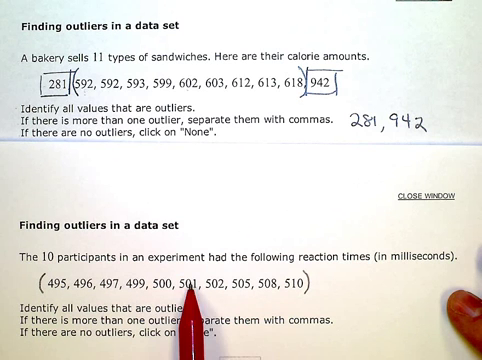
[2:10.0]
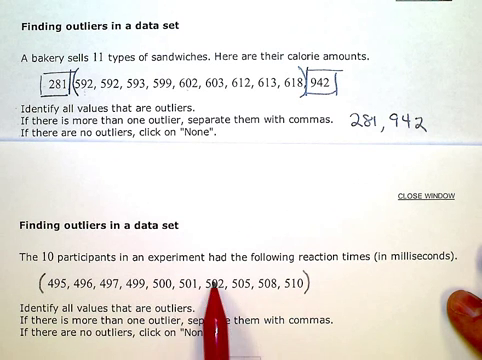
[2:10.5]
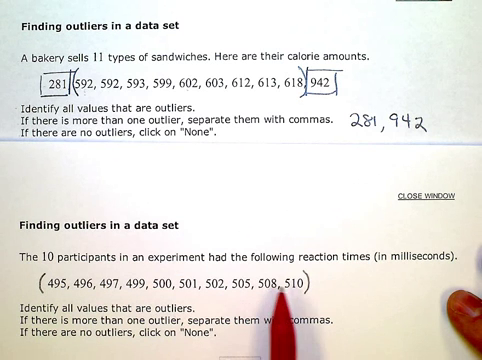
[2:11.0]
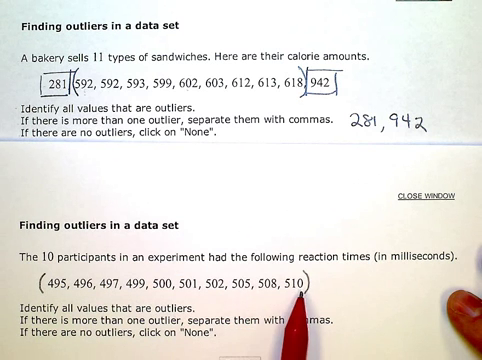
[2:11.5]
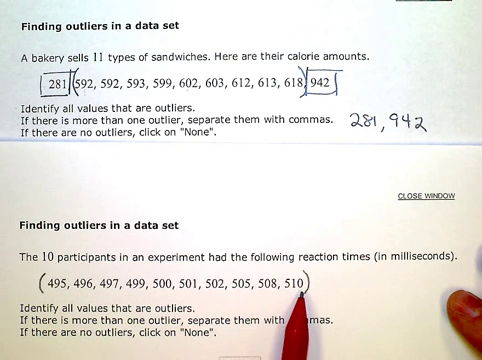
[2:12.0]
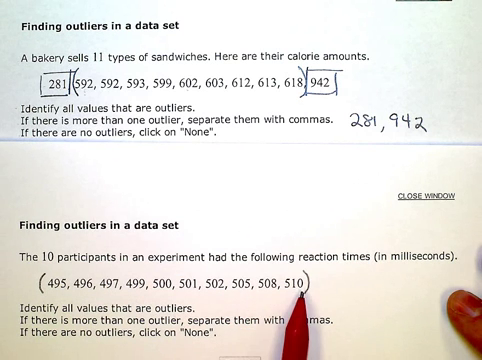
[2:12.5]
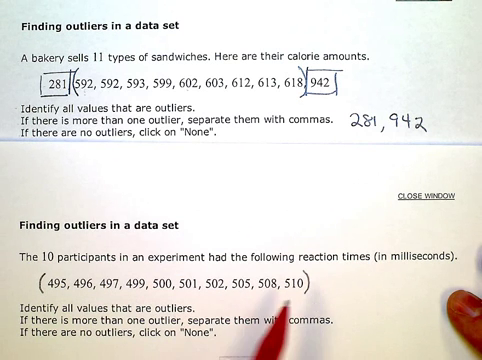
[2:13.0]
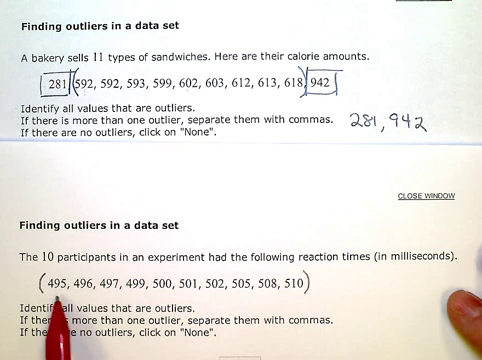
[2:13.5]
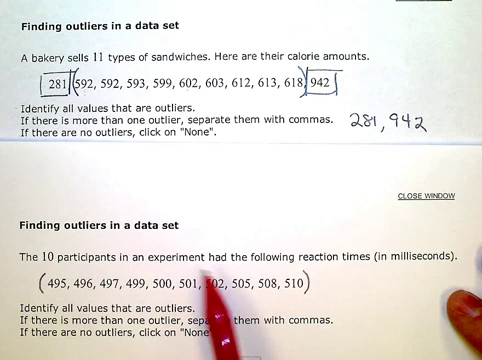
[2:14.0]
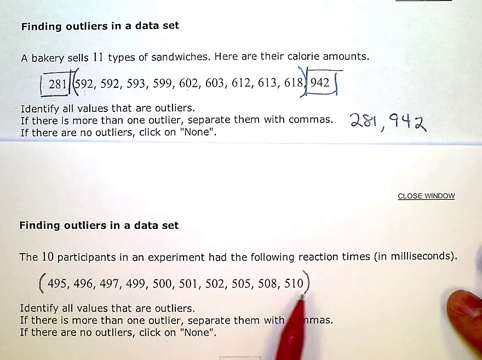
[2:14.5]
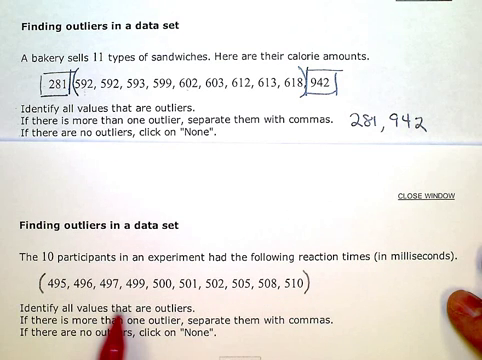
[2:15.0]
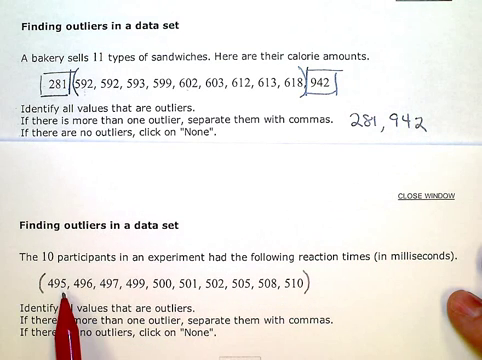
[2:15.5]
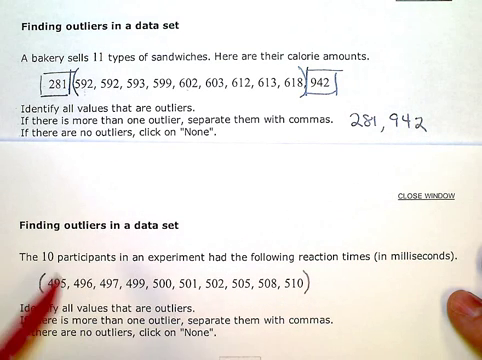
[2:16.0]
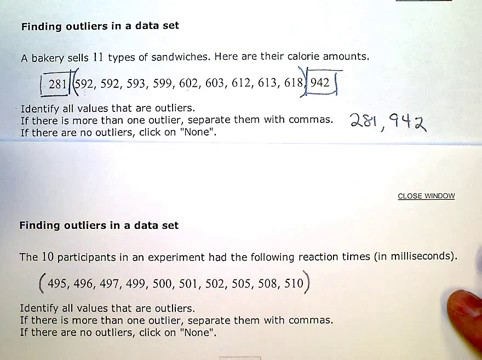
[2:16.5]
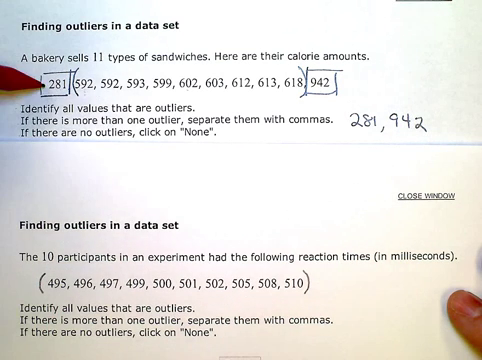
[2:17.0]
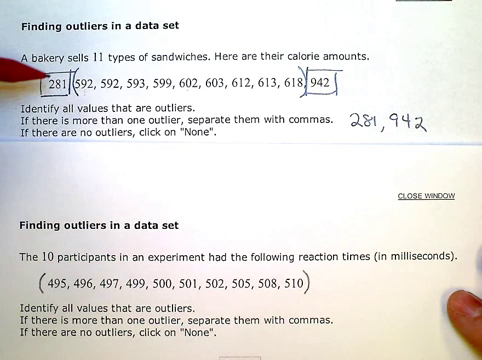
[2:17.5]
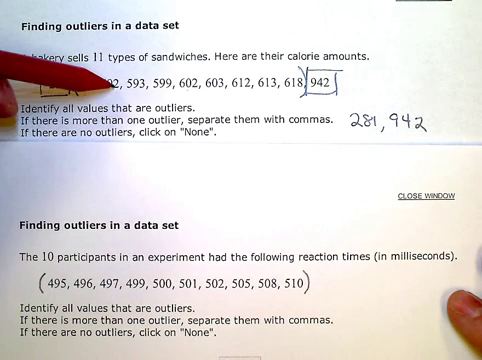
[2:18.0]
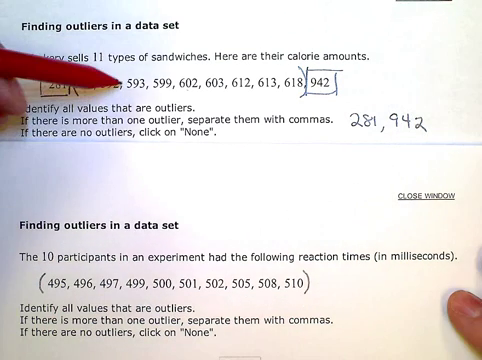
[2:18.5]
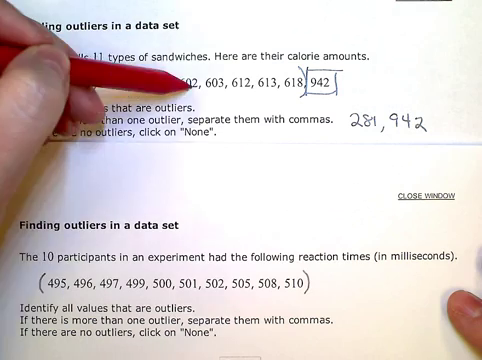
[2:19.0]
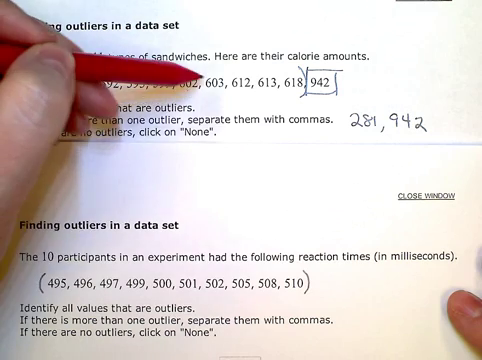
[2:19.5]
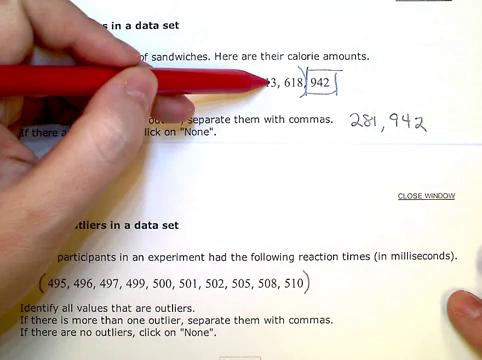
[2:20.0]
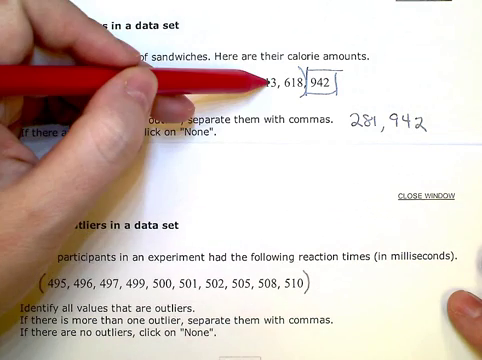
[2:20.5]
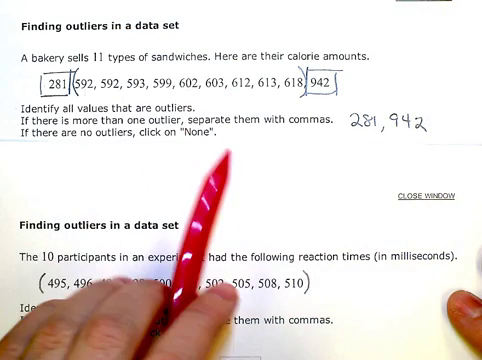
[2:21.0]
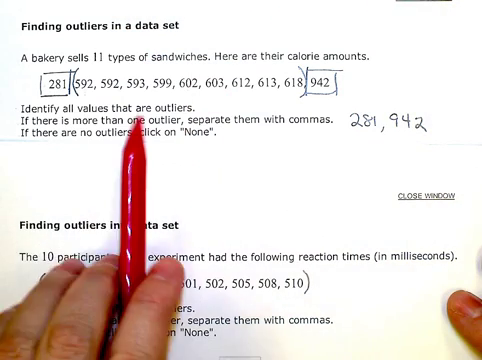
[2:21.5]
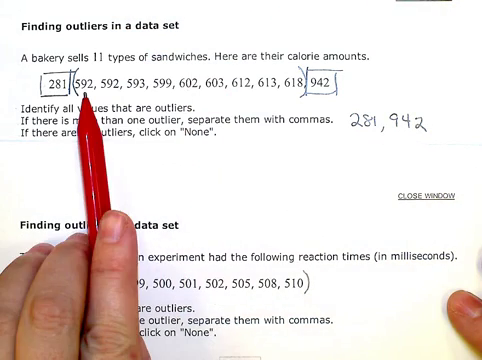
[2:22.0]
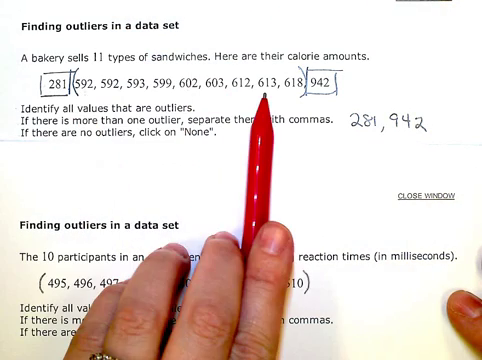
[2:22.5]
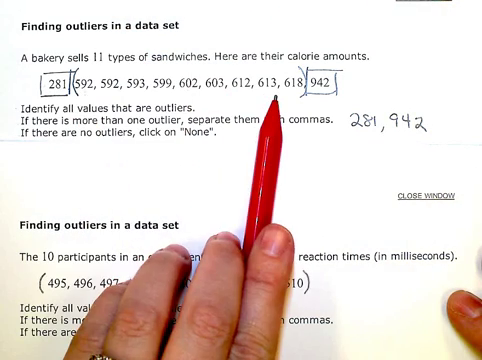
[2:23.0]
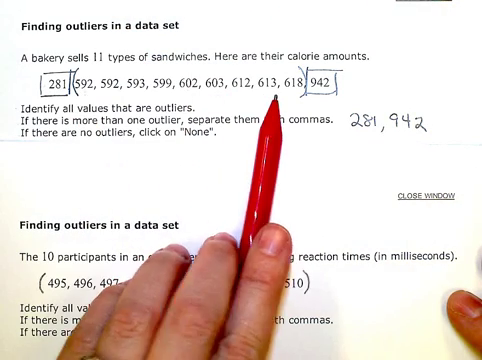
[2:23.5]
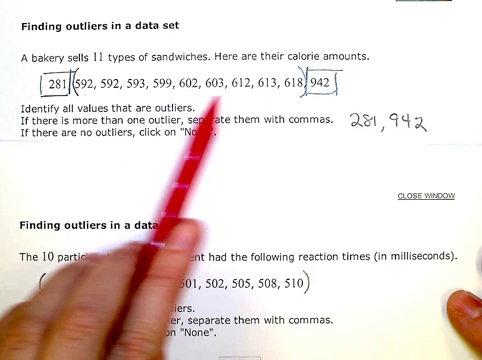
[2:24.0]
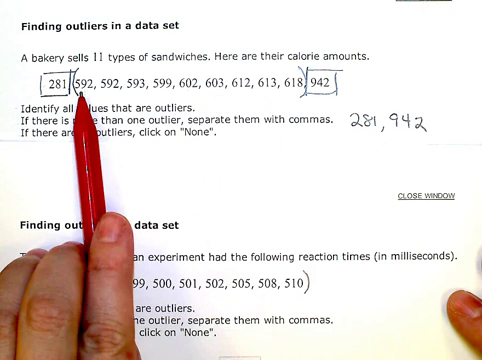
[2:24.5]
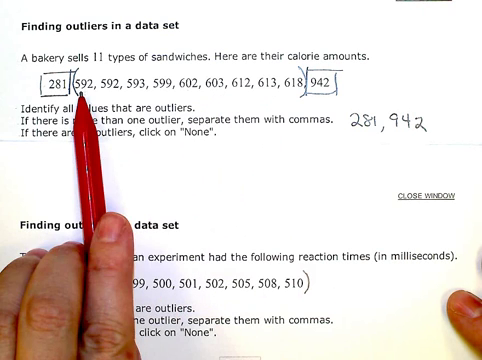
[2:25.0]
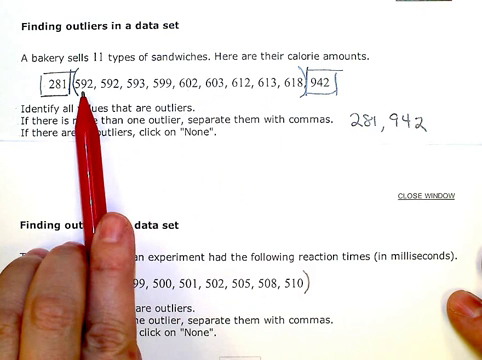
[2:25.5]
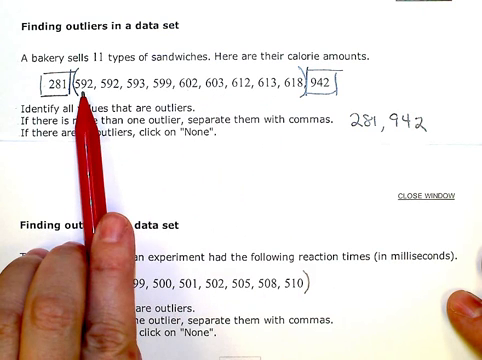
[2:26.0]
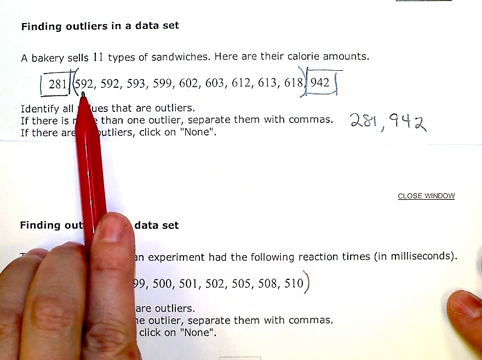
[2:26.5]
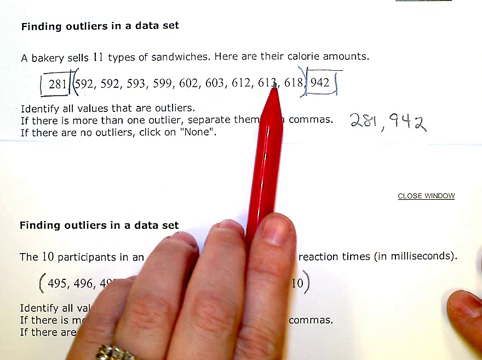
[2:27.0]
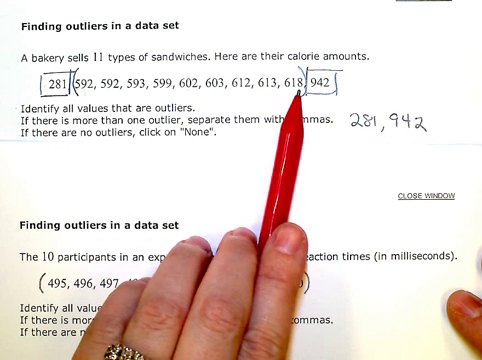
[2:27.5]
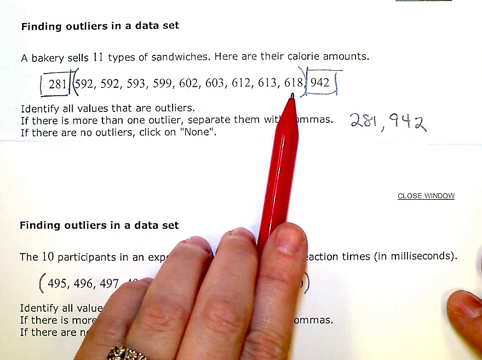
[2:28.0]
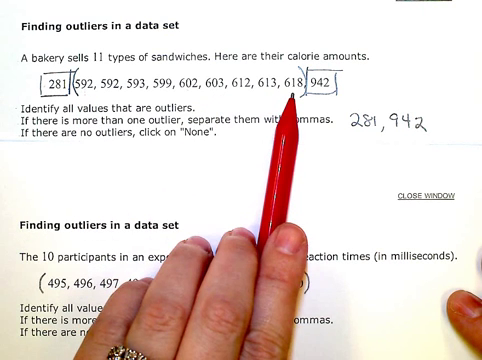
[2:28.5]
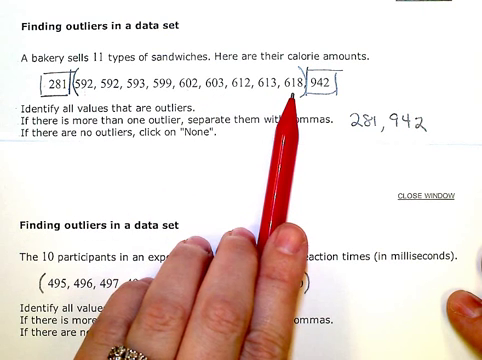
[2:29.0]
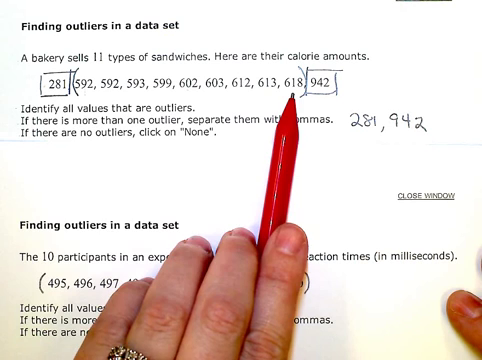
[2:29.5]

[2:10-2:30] The index finger points toward "milliseconds" while the pen, held in the left hand, starts at 501 and moves across to 510 at the end. The pen is moved all the way across again for emphasis and then taken away from the screen, and the shadow of the hand appears briefly on the left side. The pen is brought in from the top left back to question one, pointing to the numbers in the brackets and moving all the way to the end of the array. The pen rests on the middle finger, held by the index finger and thumb, pressing into the part of the hand where the thumb and finger meet. It is moved halfway across, pointing to the list of numbers, then moved from left to right several times, as if explaining question one in relation to question two. The section ends with the pen at 618, the final number in the brackets on question one.